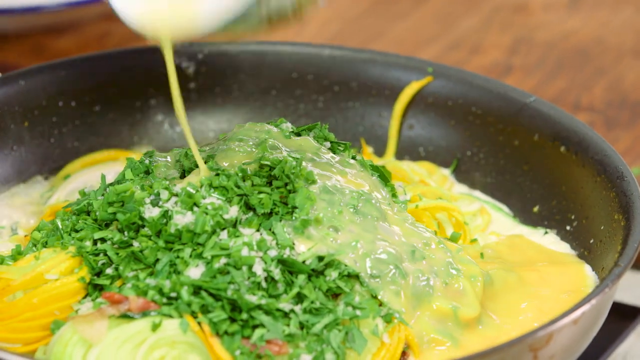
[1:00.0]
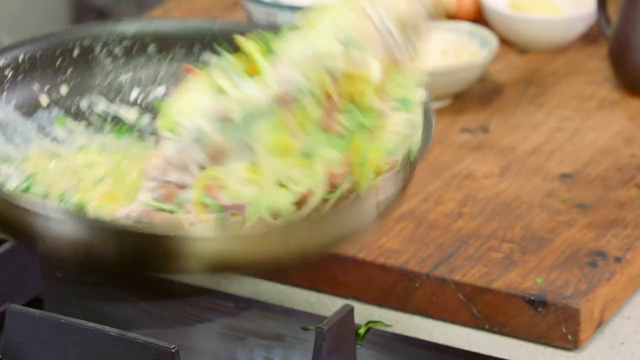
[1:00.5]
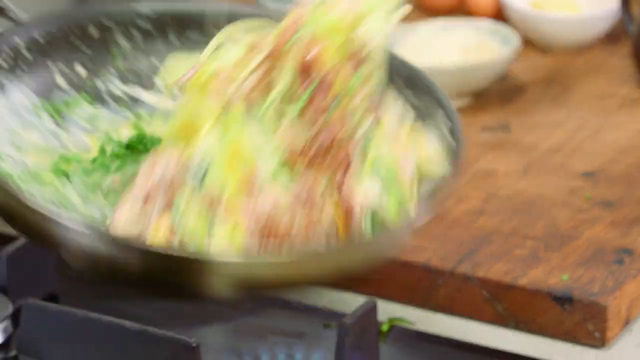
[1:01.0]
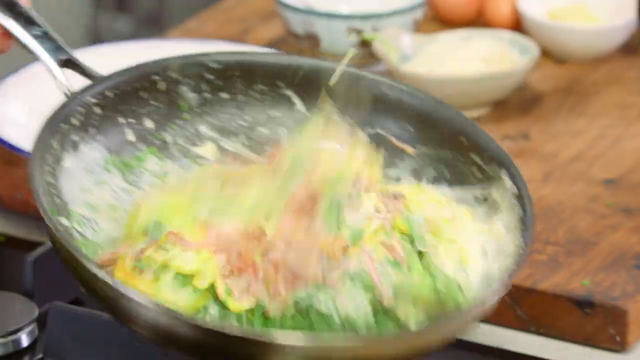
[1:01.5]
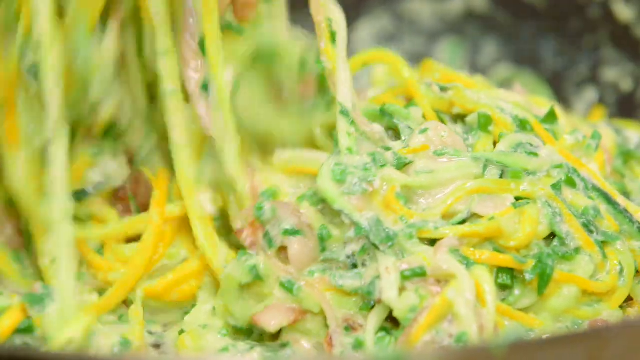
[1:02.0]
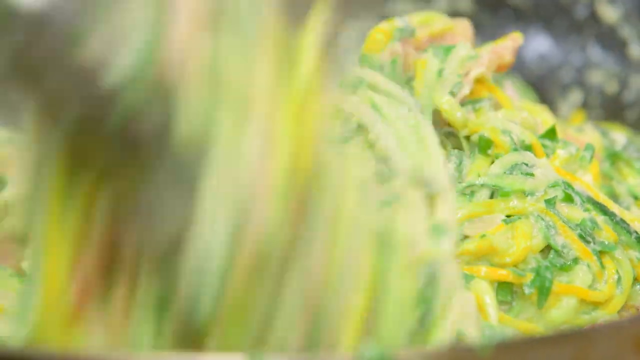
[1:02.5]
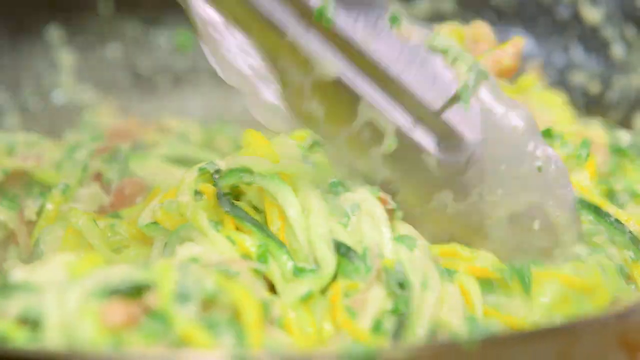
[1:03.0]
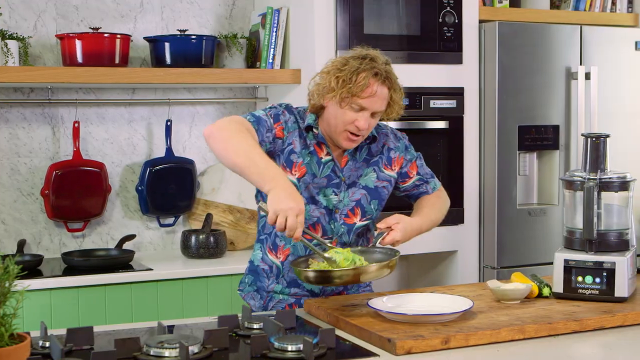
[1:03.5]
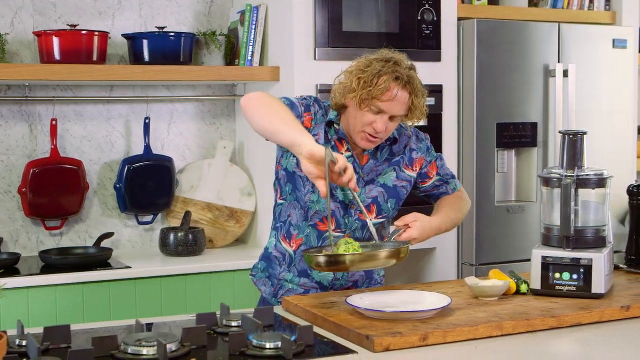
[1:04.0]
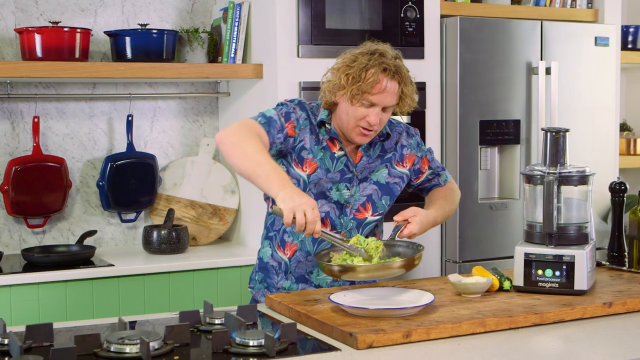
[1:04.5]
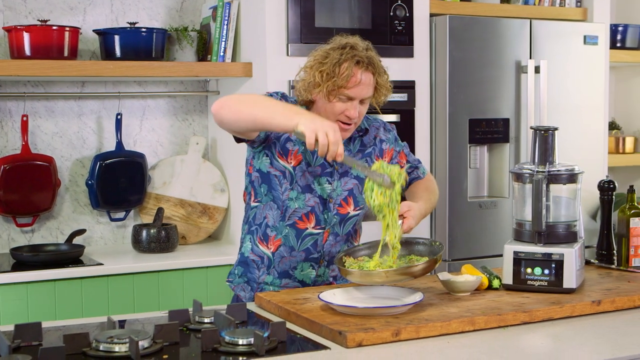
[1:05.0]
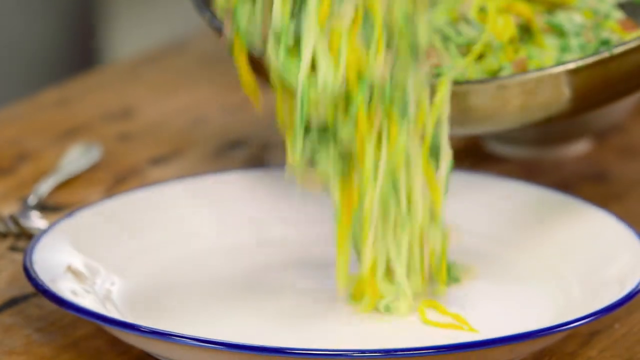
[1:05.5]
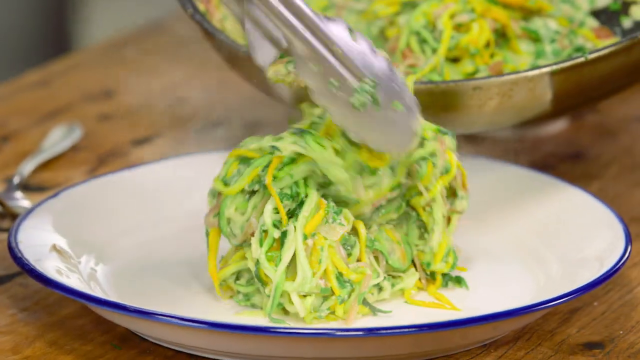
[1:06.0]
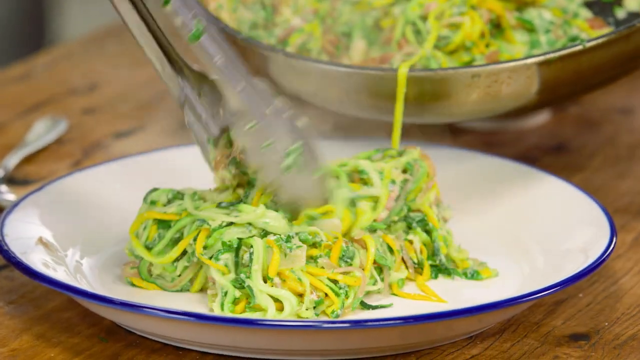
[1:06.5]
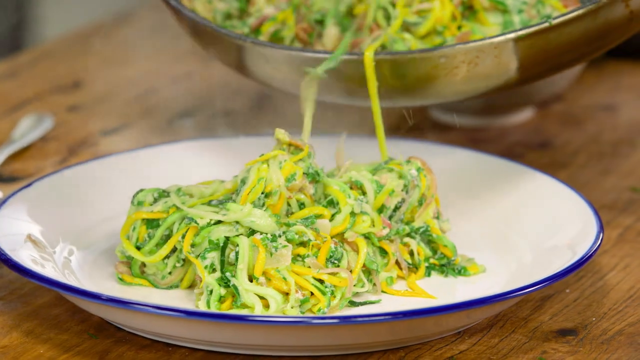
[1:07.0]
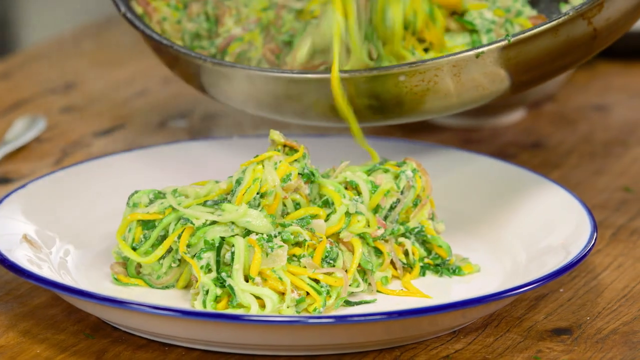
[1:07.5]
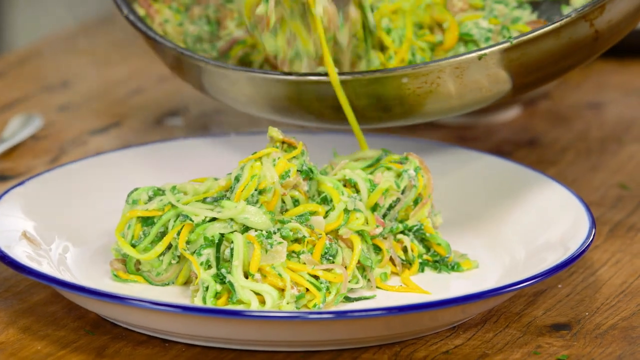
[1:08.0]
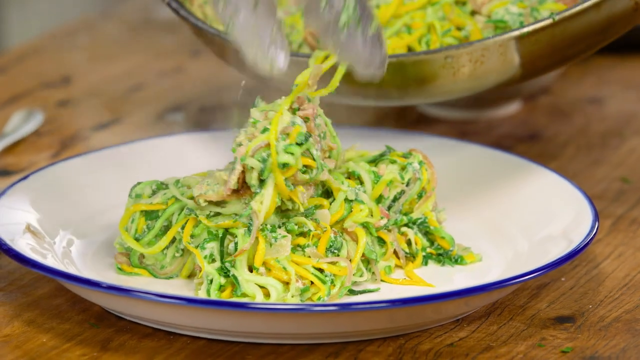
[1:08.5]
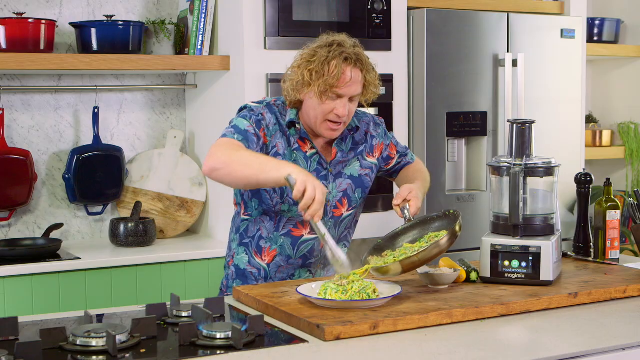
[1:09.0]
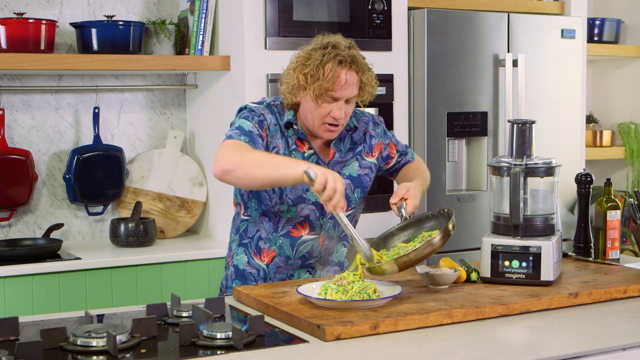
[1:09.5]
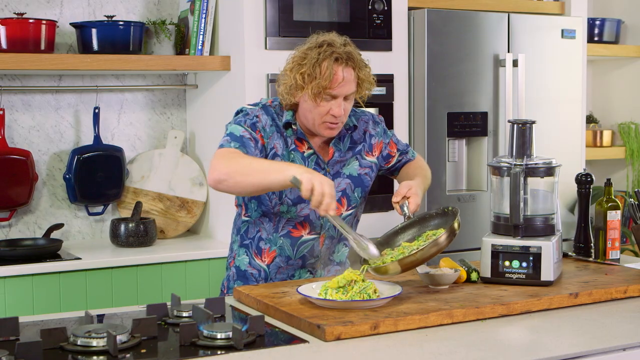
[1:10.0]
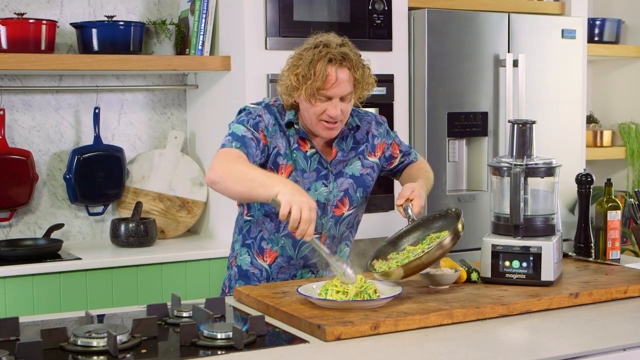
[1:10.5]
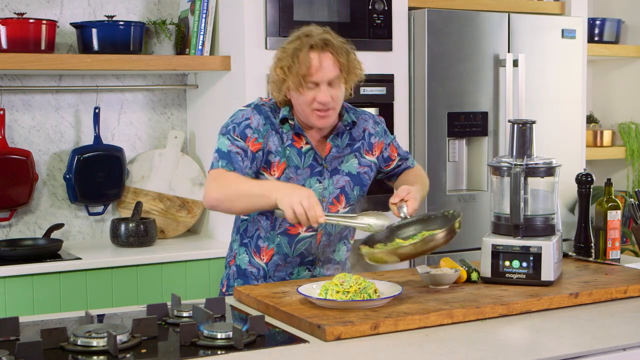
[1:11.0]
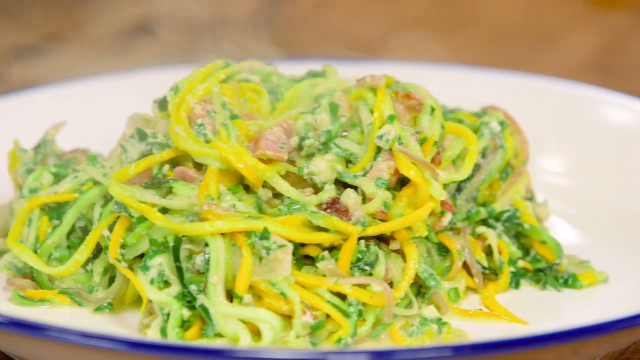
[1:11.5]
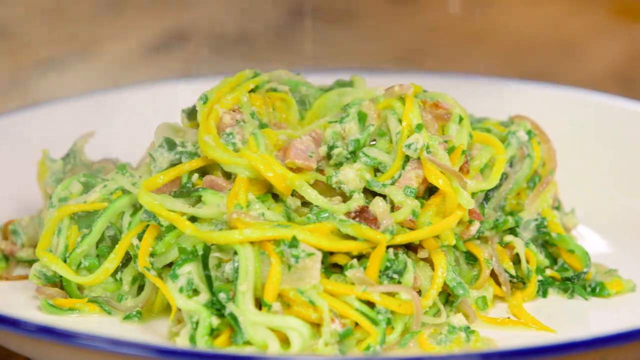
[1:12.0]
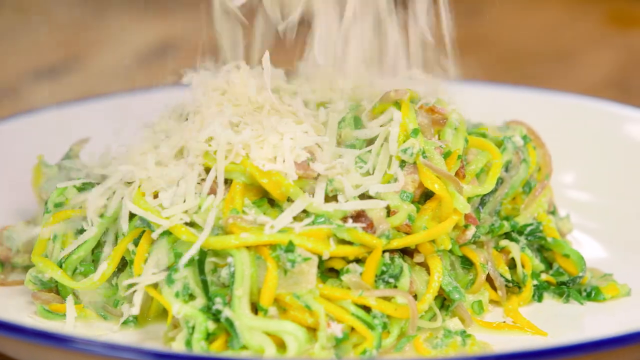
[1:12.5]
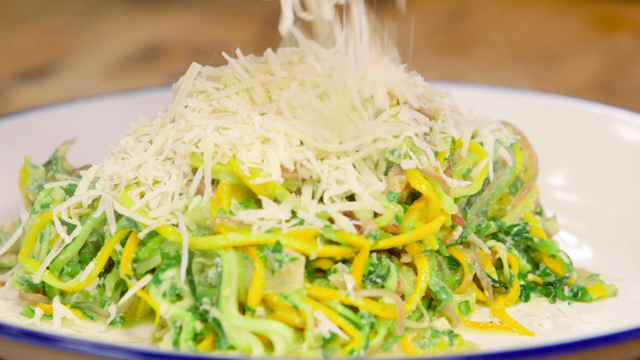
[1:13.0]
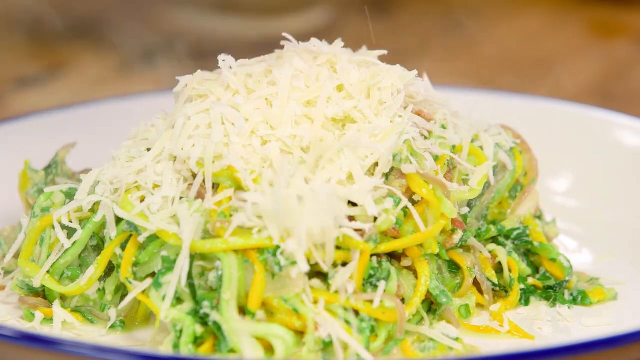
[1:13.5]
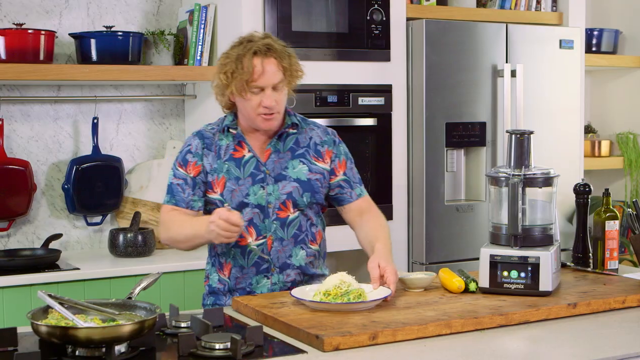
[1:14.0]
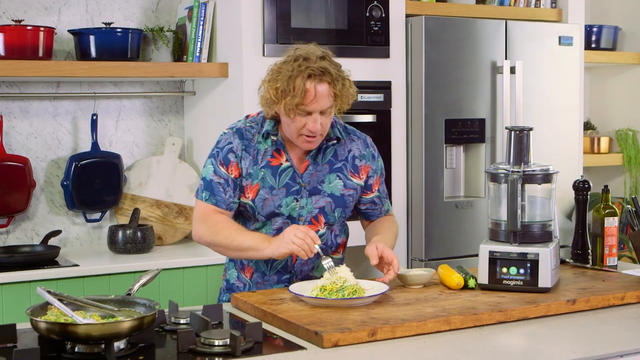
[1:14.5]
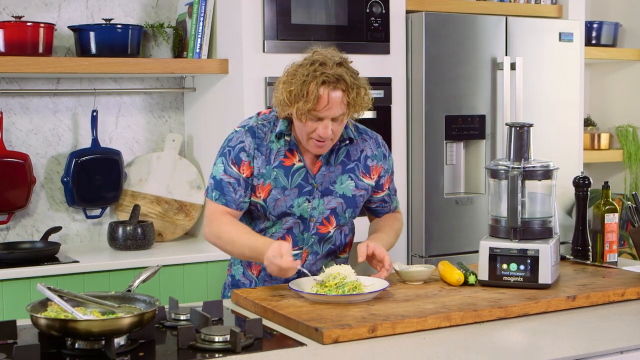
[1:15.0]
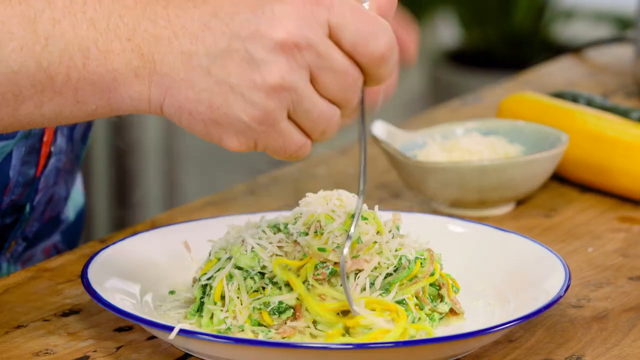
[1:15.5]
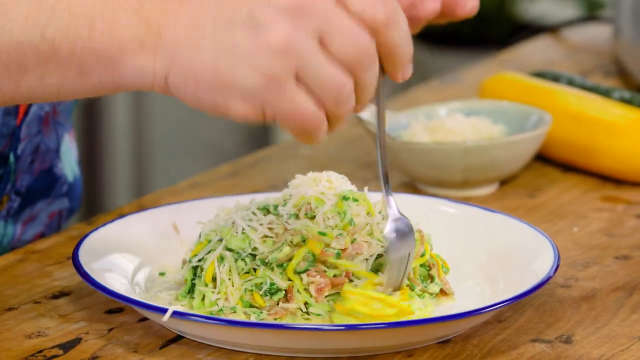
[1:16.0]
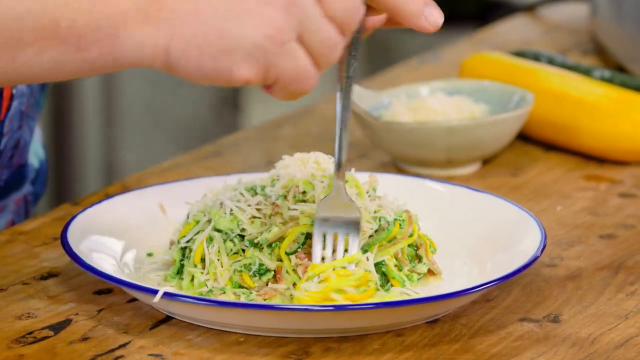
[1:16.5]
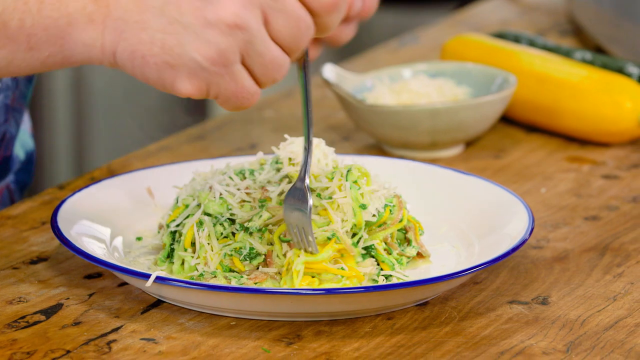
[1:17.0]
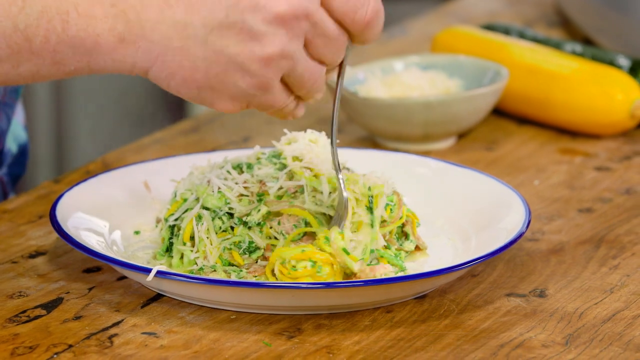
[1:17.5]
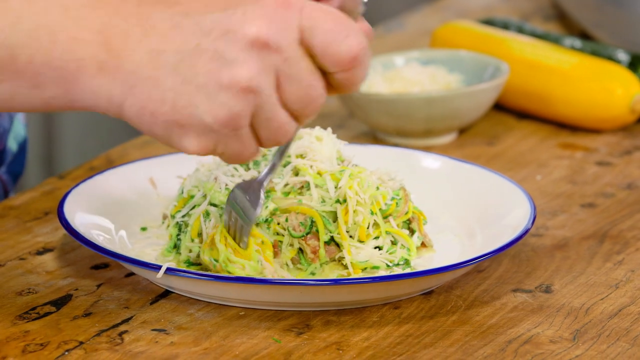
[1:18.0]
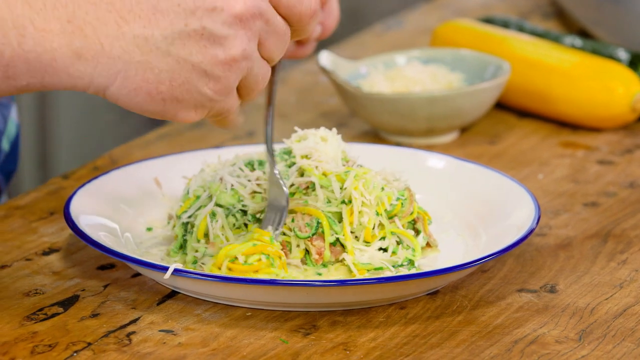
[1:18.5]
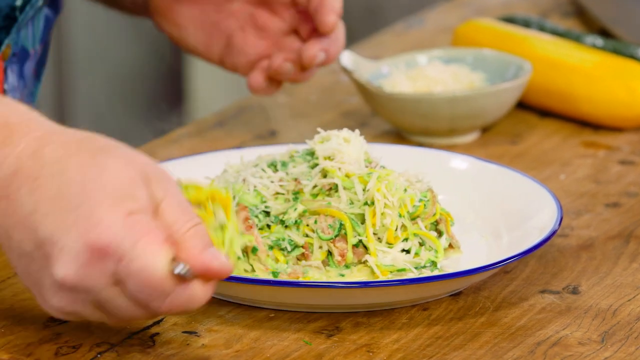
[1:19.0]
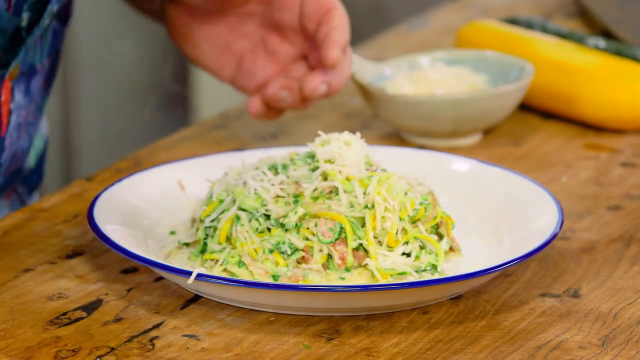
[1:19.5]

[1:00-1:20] The chef does not use a spoon or a ladle to mix the food; he flips the mixture up and down in the pan the way one would flip a pancake or eggs. He keeps picking the pan up from the stove and flipping the mixture, adding the eggs and continuing to flip. He cooks it only for about two to three minutes, not letting the egg cook fully, and then dishes it. A plate is ready on the countertop. Using a utensil, he shapes the spaghetti-like vegetables into a ball and puts them on the plate.